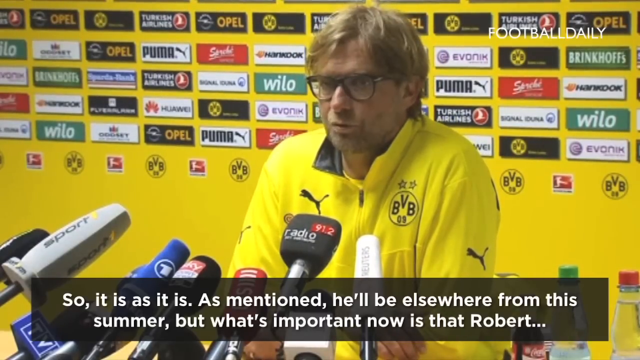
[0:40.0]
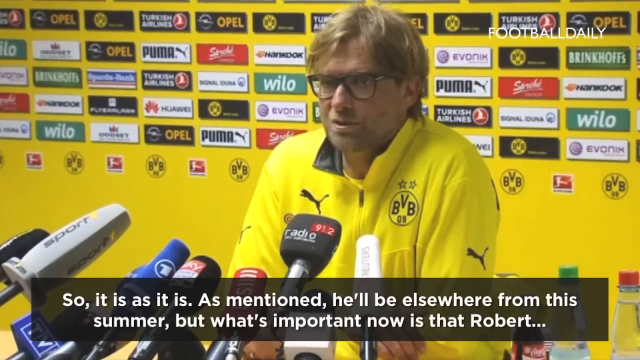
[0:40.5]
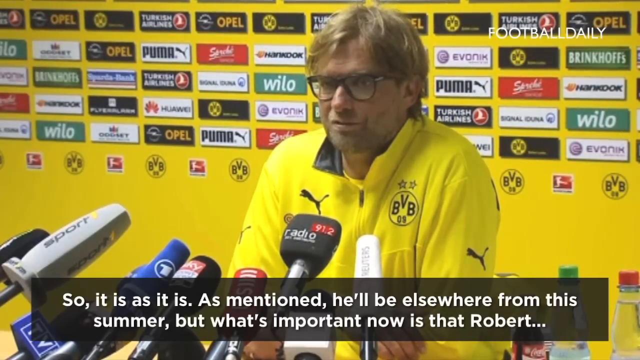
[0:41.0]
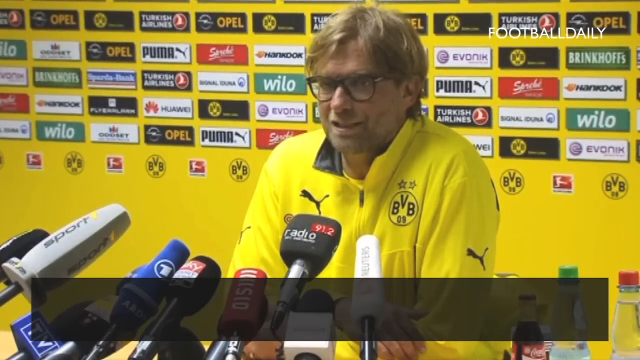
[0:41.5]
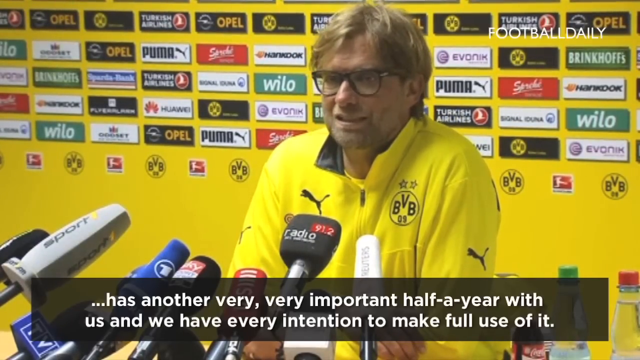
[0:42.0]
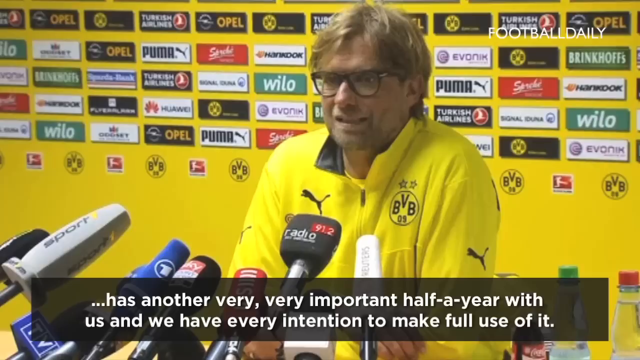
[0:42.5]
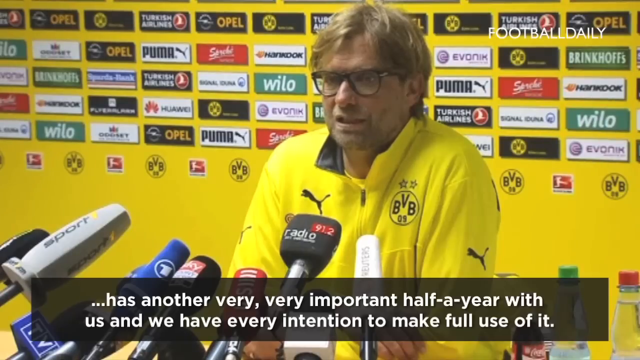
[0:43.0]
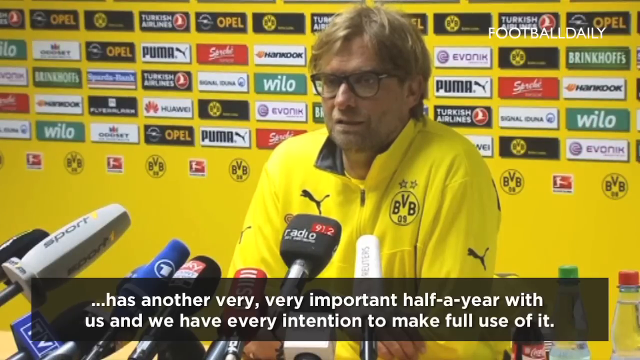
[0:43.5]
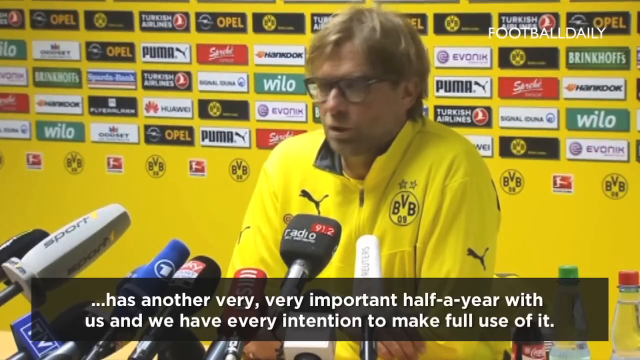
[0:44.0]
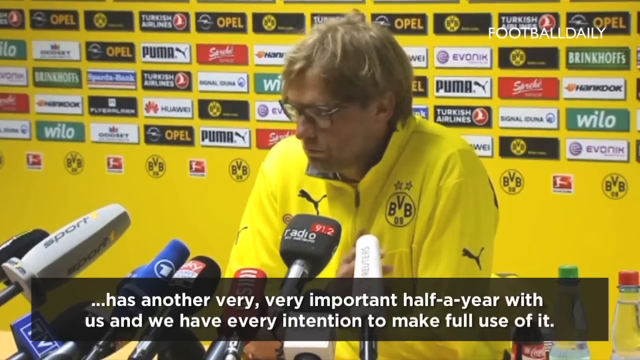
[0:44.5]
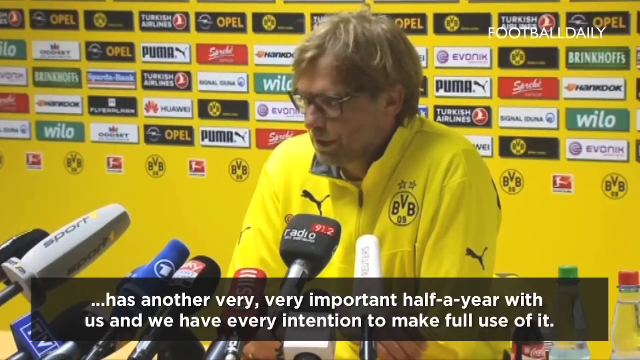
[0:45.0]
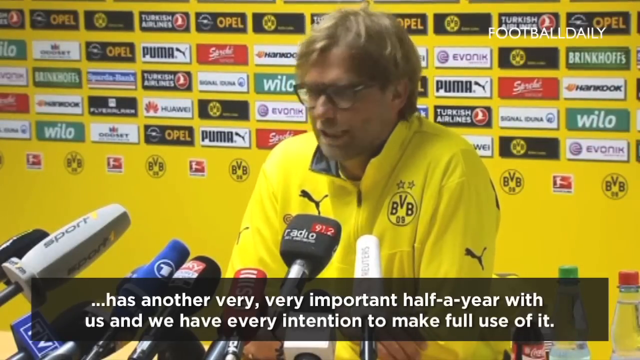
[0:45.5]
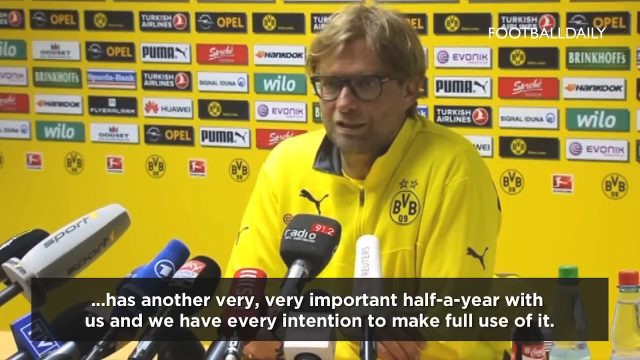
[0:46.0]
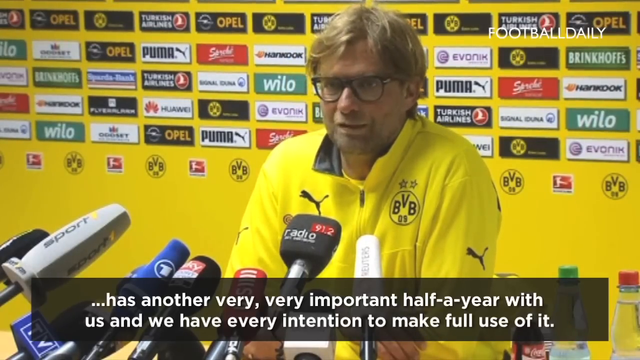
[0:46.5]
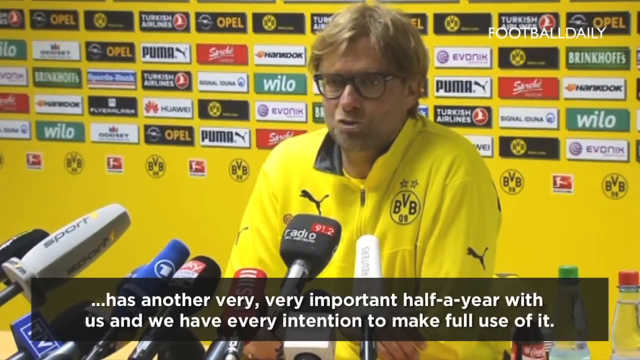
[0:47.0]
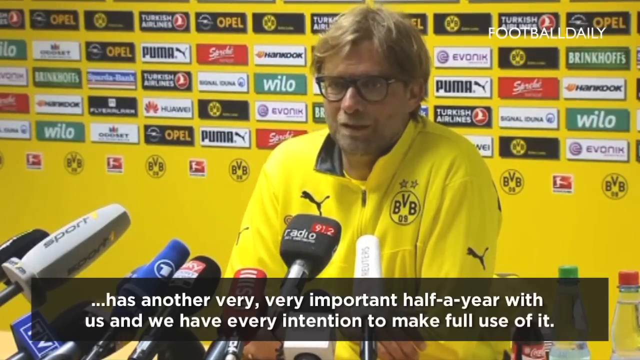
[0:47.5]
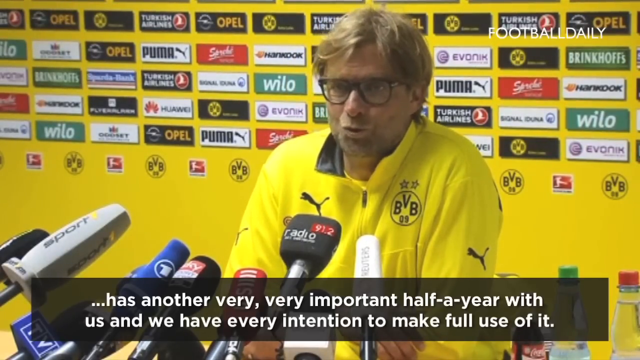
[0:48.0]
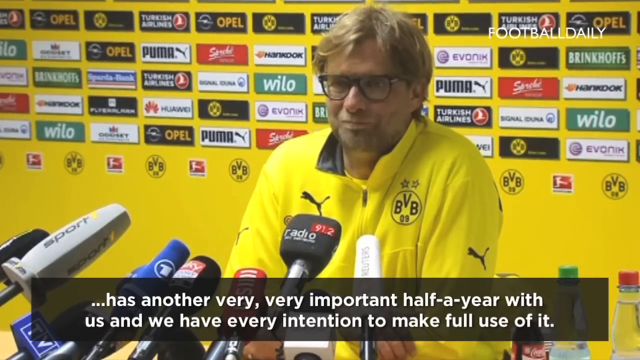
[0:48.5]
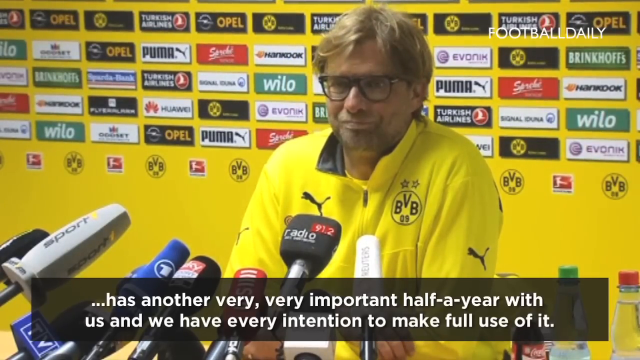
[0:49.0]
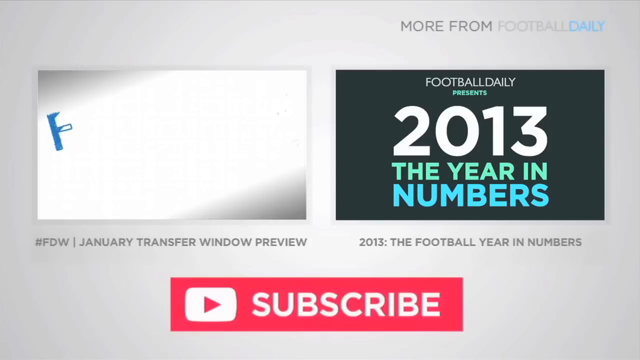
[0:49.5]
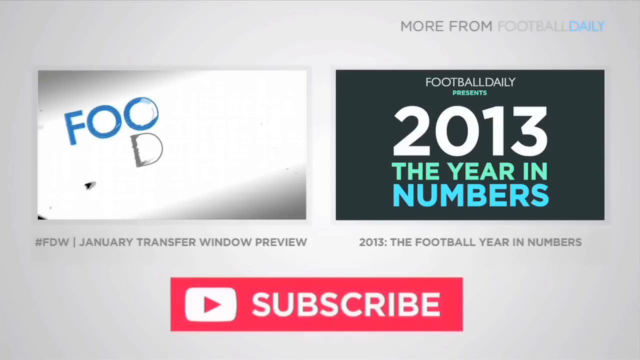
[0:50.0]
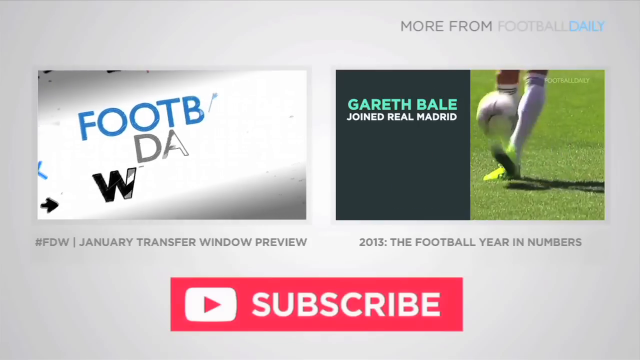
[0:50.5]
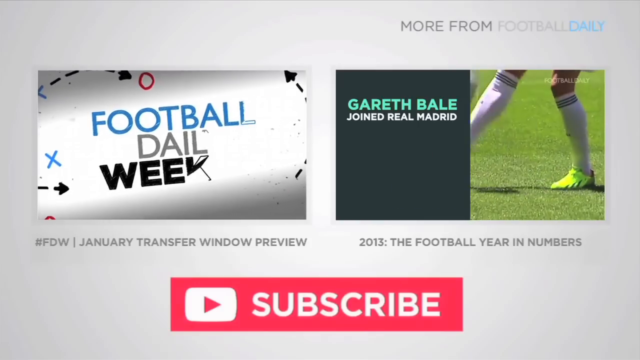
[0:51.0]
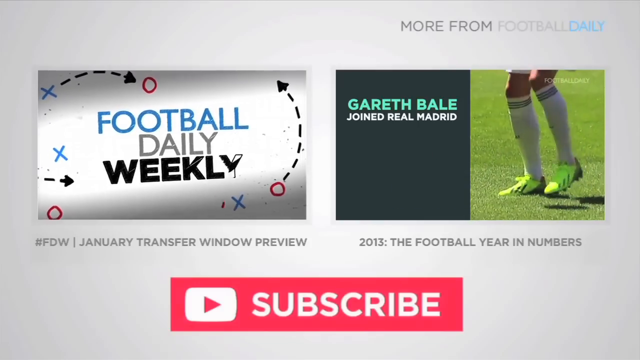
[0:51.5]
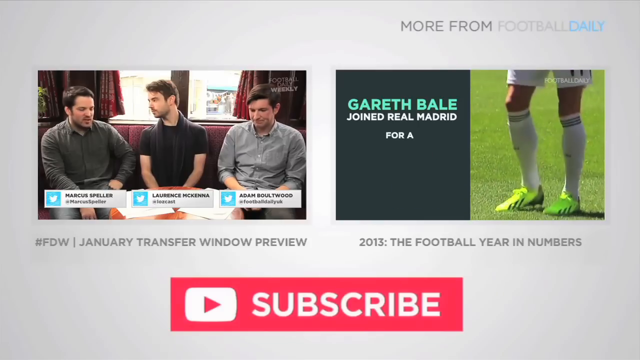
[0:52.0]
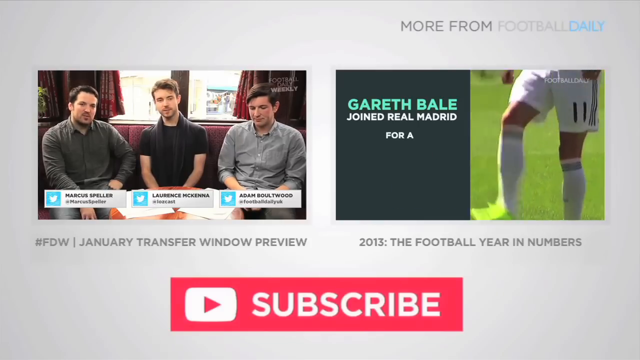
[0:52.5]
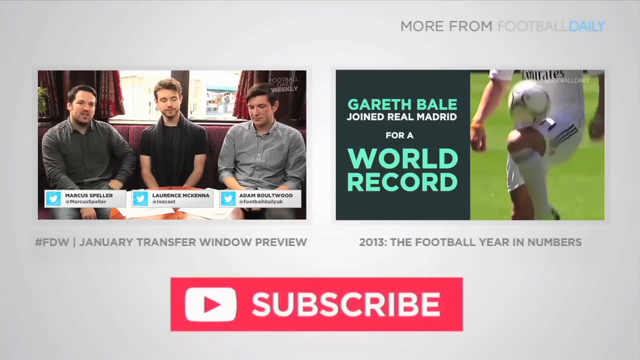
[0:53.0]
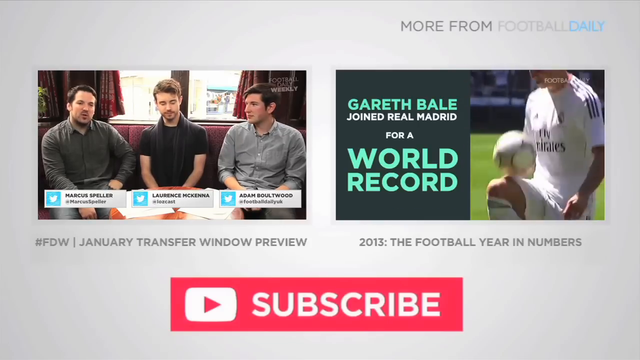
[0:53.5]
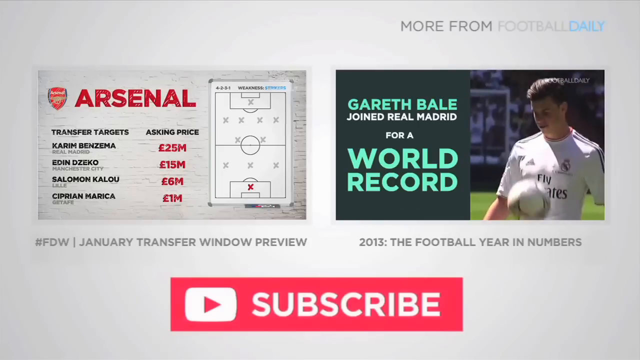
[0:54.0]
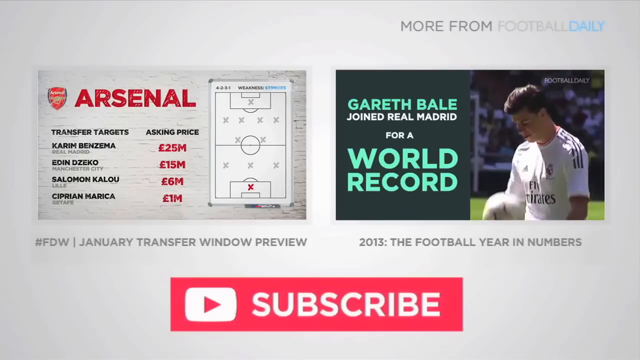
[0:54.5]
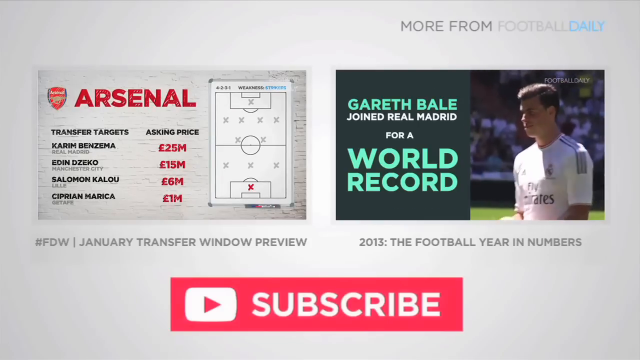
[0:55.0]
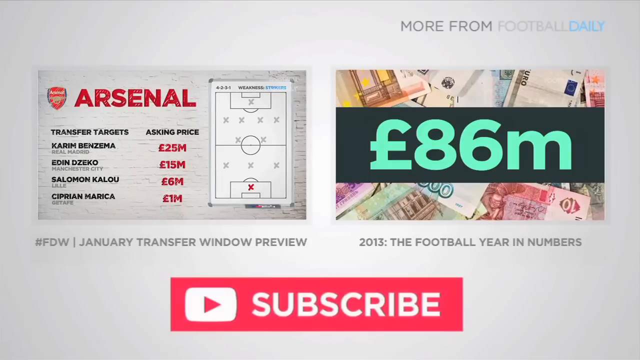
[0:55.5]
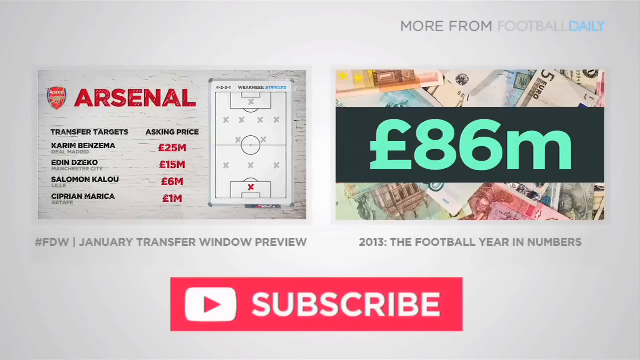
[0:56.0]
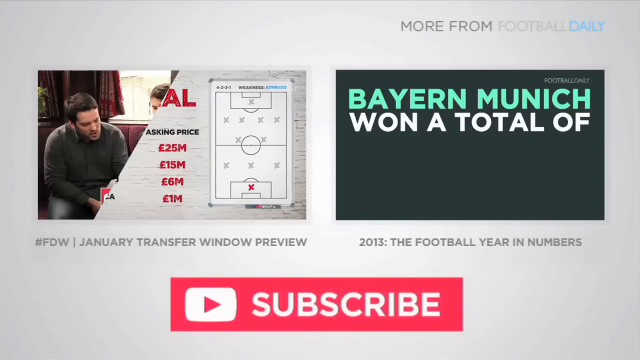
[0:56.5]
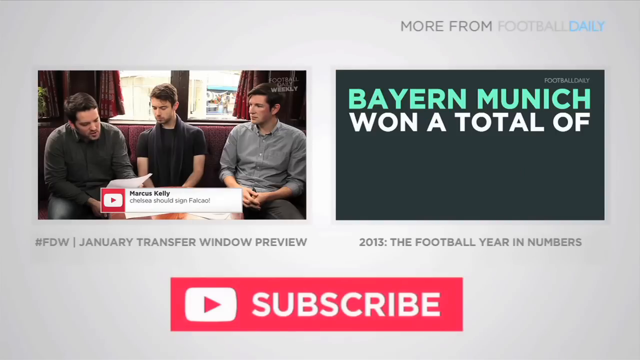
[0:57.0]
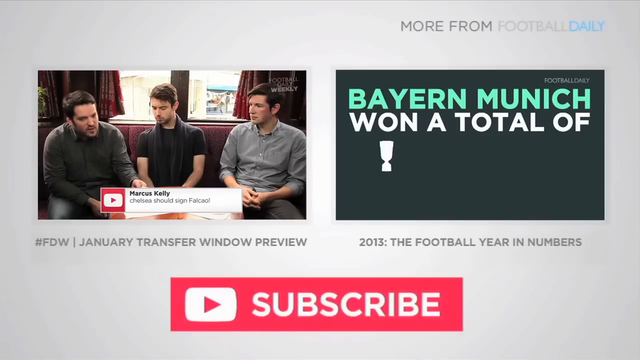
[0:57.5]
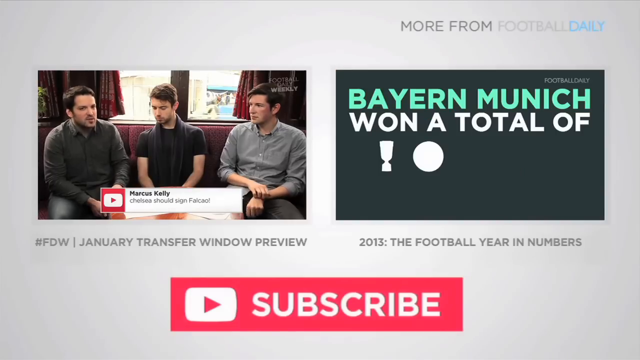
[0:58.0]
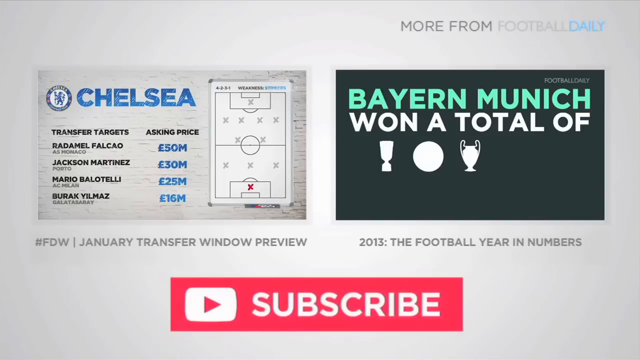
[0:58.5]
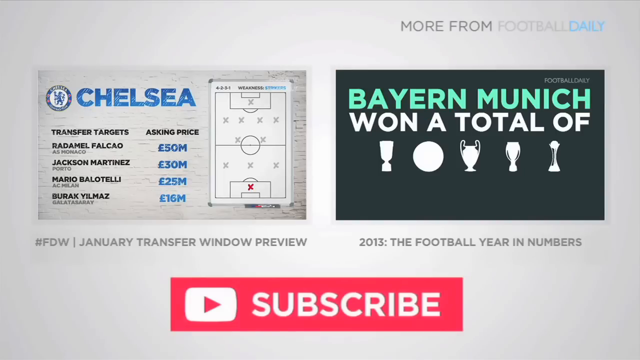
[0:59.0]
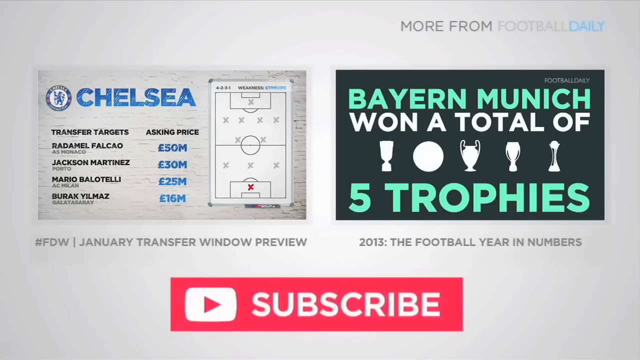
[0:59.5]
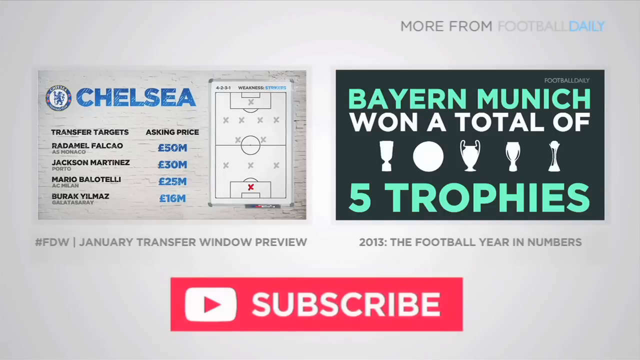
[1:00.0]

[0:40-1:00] A middle-aged man, Jurgen Klopp, stands at a podium. He wears a bright yellow club tracksuit top that visually matches the background, with the BVB crest on the jacket and the Puma logo opposite. Text at the bottom of the video reads "So it is as it is. As mentioned, he'll be elsewhere from this summer. But what's important now is that Robert... has another very, very important half a year with us, and we have every intention to make full use of it." His mouth moves at a steady pace of speech, and he continues to look out at the microphones and the people in the crowd as cameras flash on his face. A transition then leads to an outro on a white background showing two further videos that can be played: the left one is "Football Daily Week" and the right one is "2013, the Football Year in Numbers". A large YouTube subscribe button appears at the bottom of the outro, and the video previews change, with the left one ending on a January transfer window preview while the right one still shows "2013, the Football Year in Numbers". At the top is a "more from Football Daily" advertisement.